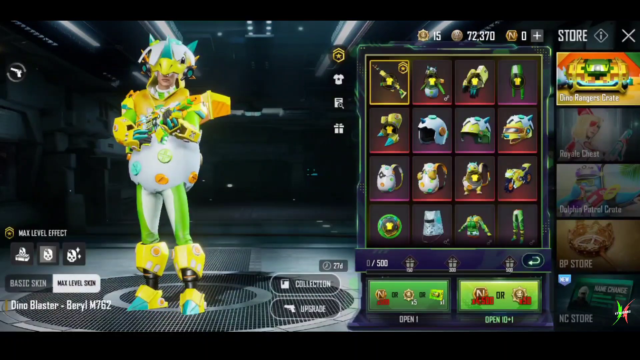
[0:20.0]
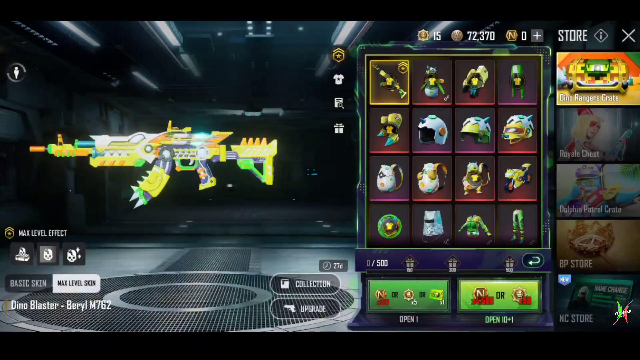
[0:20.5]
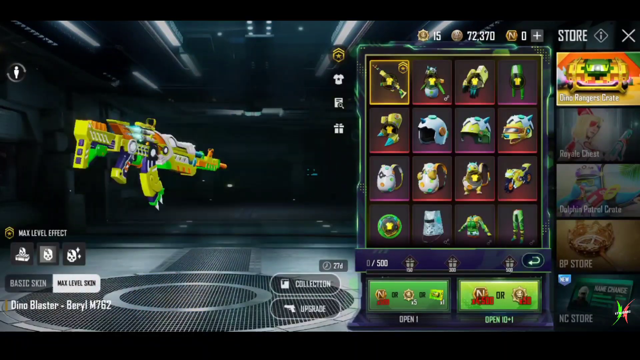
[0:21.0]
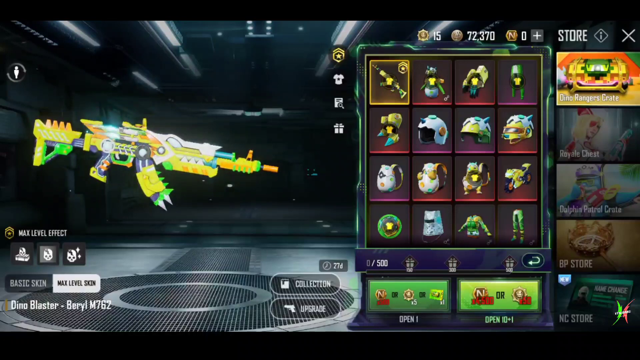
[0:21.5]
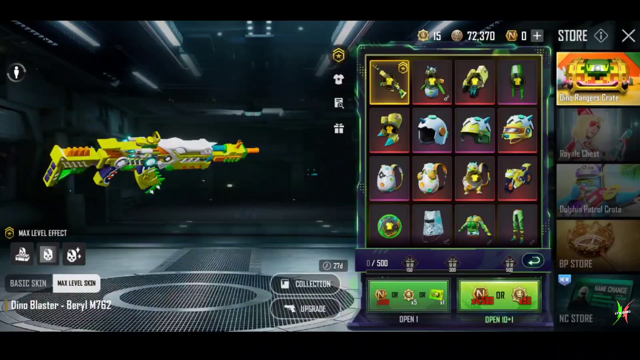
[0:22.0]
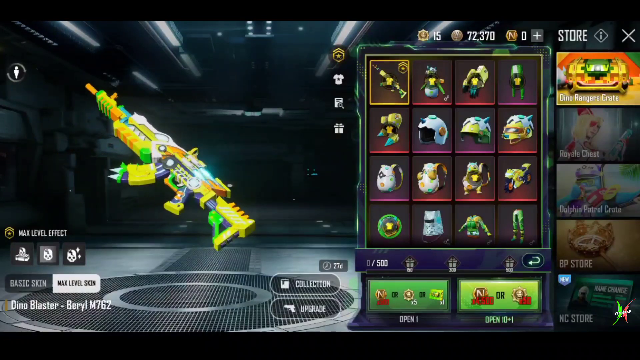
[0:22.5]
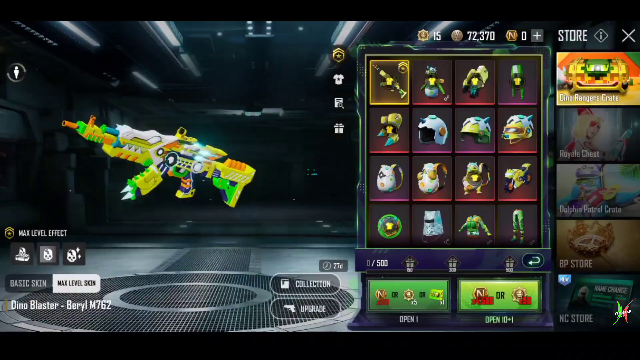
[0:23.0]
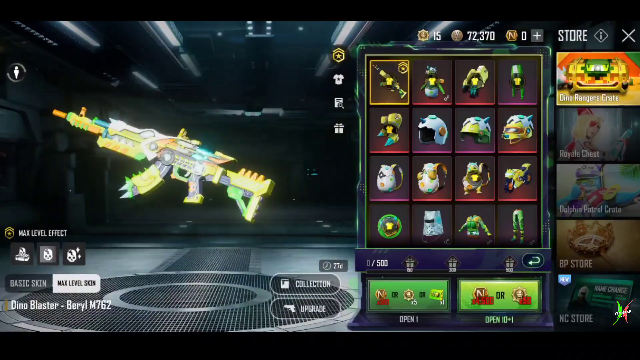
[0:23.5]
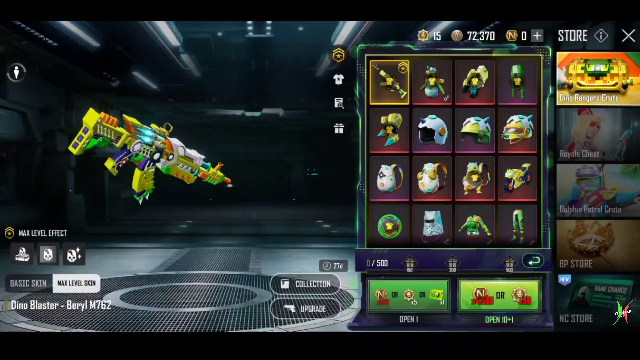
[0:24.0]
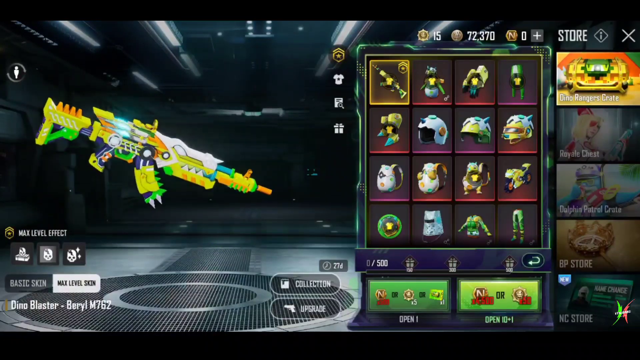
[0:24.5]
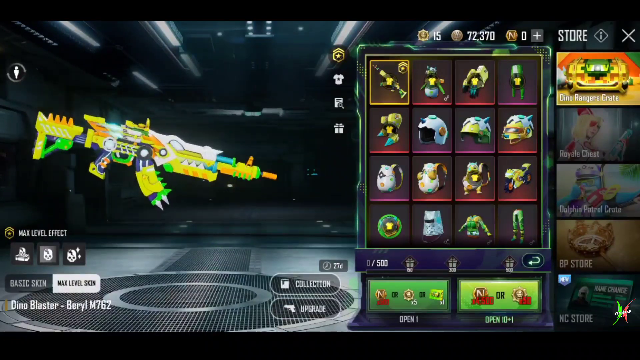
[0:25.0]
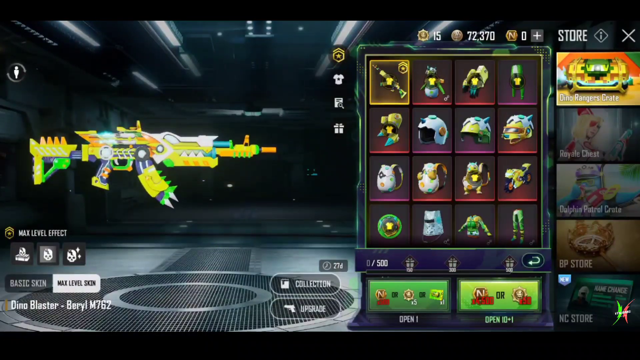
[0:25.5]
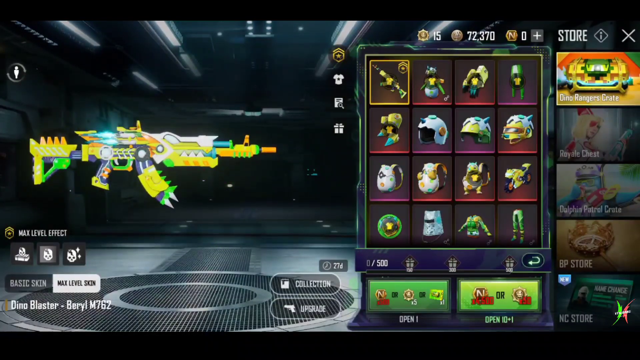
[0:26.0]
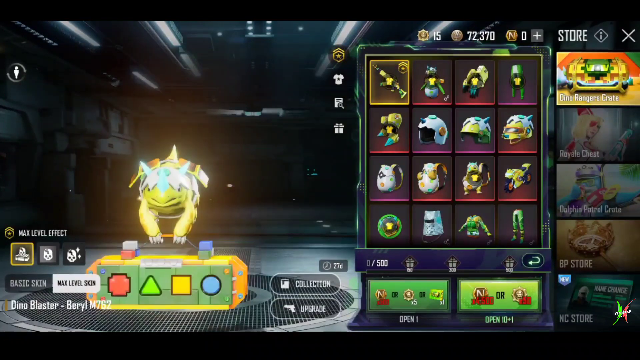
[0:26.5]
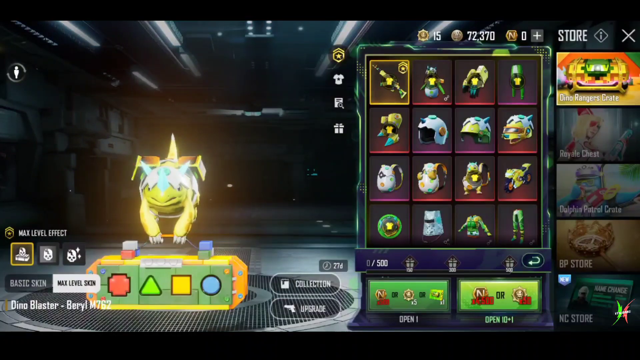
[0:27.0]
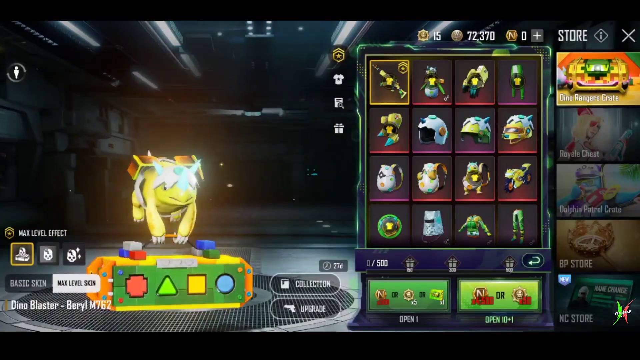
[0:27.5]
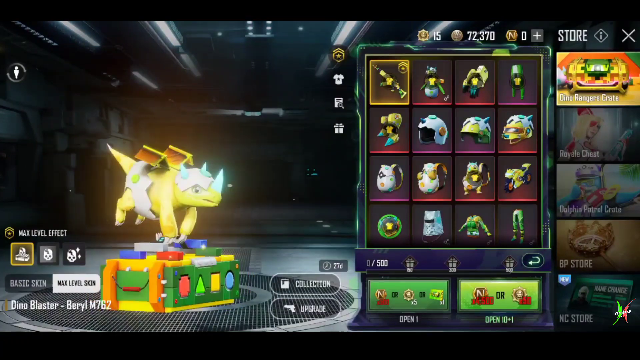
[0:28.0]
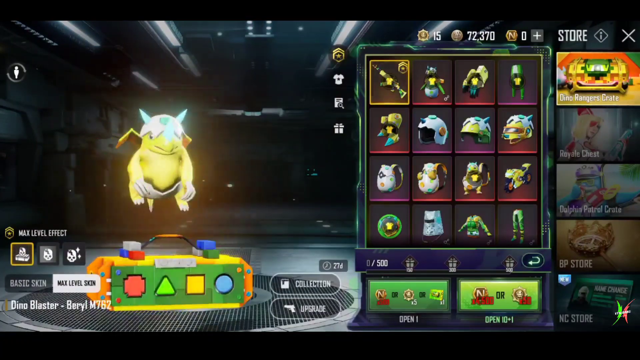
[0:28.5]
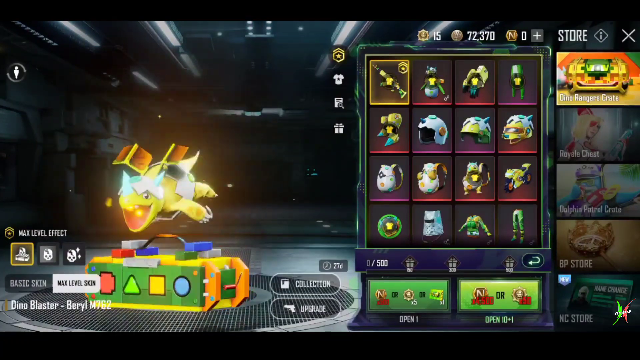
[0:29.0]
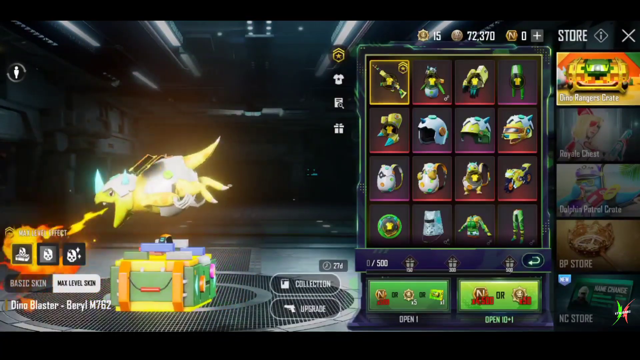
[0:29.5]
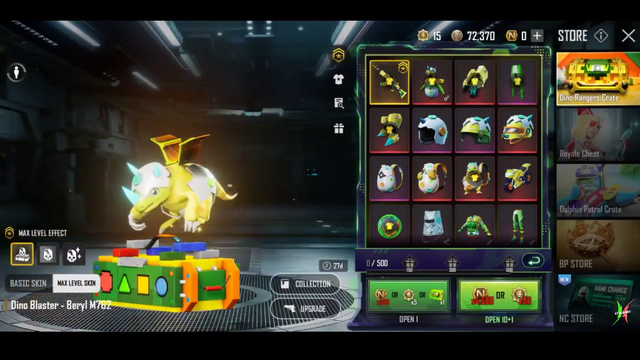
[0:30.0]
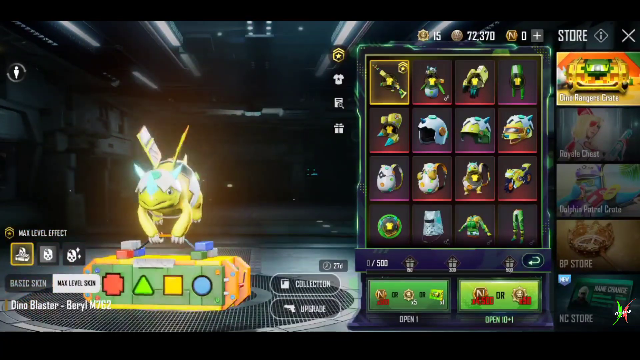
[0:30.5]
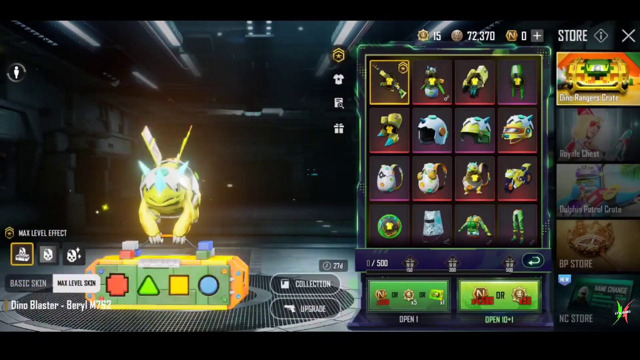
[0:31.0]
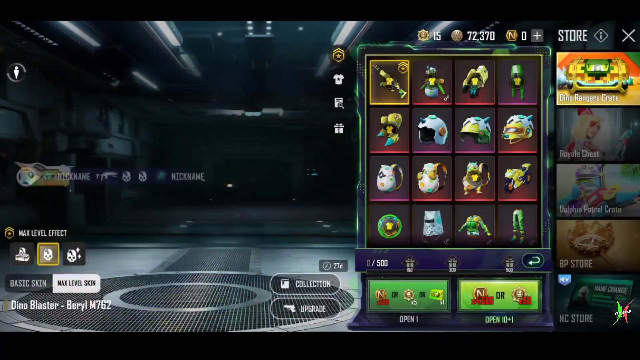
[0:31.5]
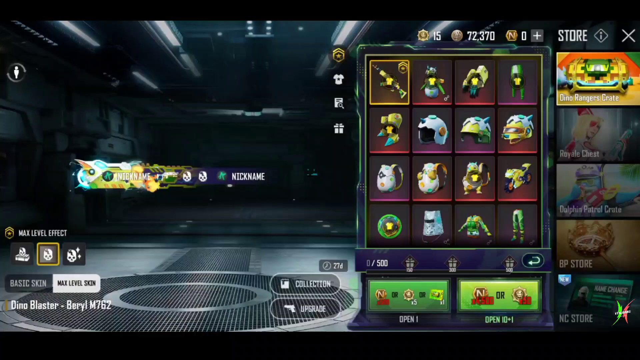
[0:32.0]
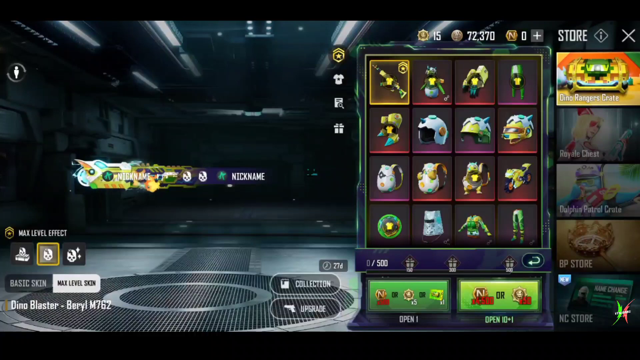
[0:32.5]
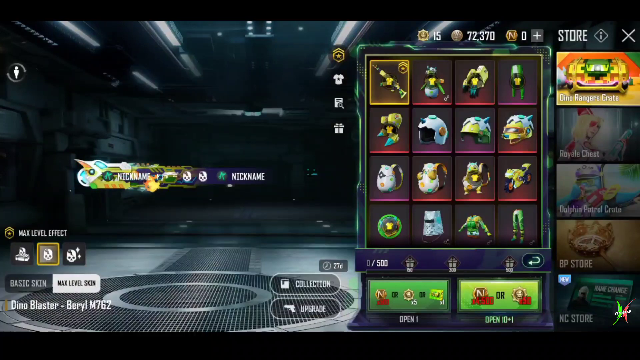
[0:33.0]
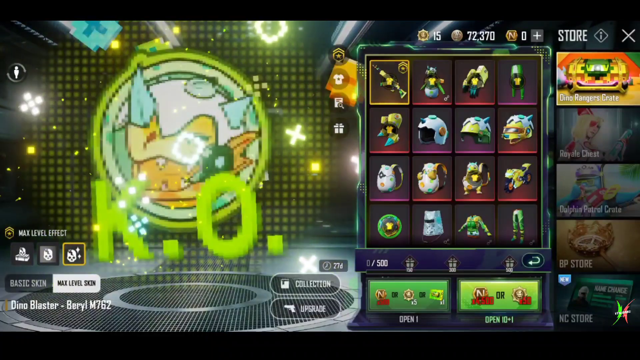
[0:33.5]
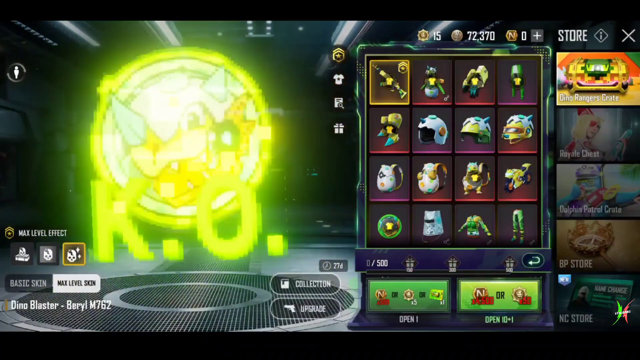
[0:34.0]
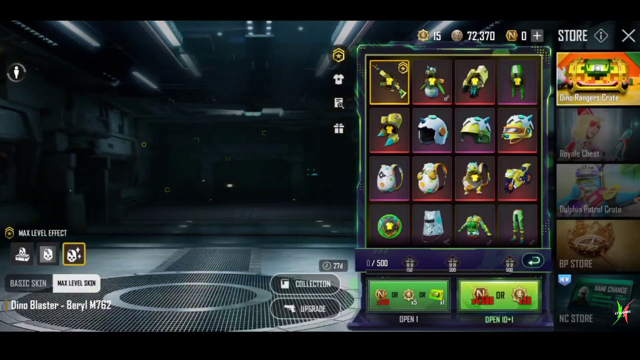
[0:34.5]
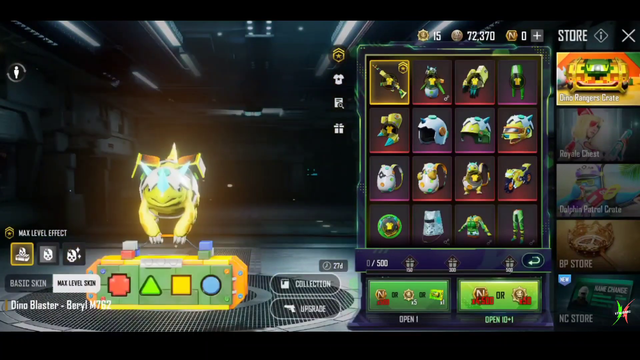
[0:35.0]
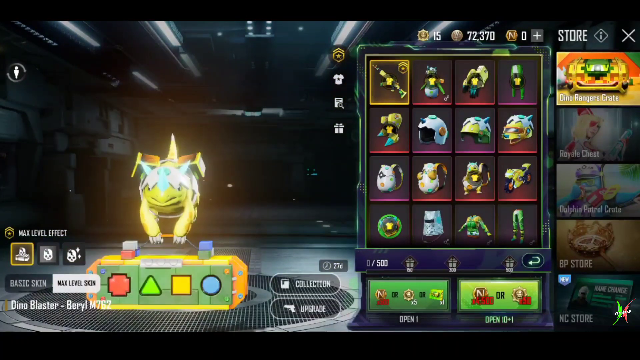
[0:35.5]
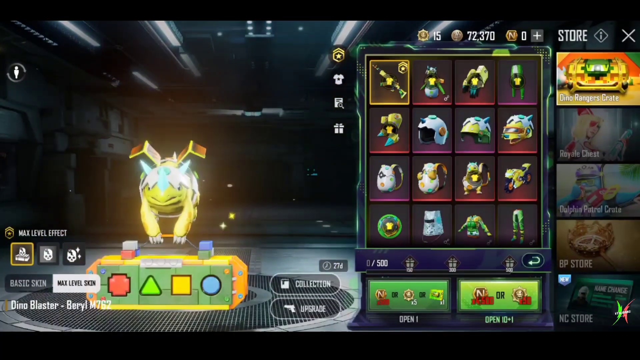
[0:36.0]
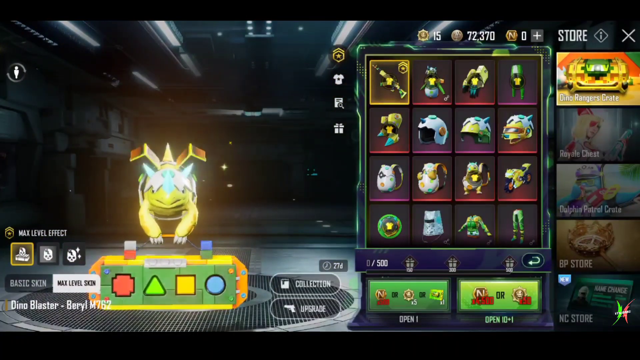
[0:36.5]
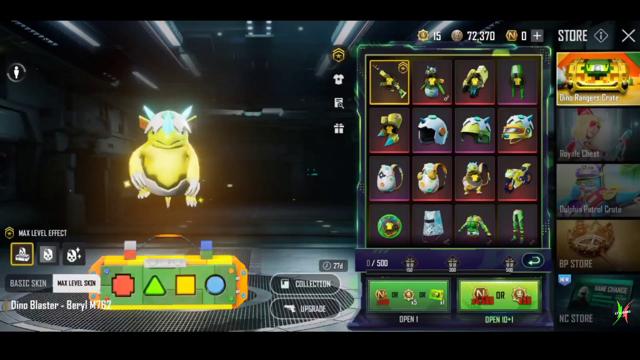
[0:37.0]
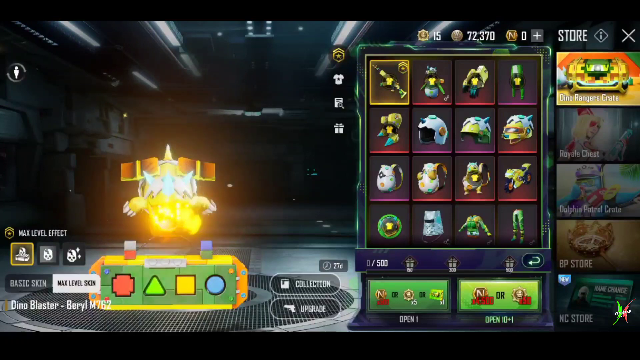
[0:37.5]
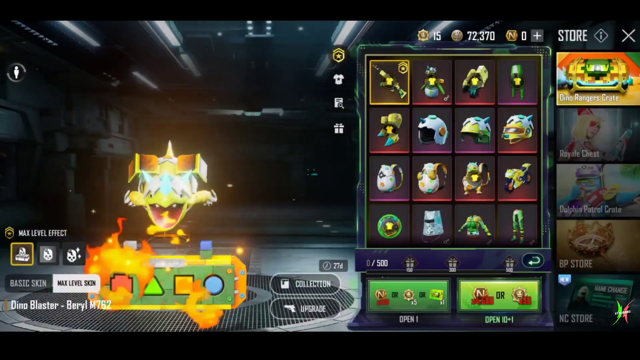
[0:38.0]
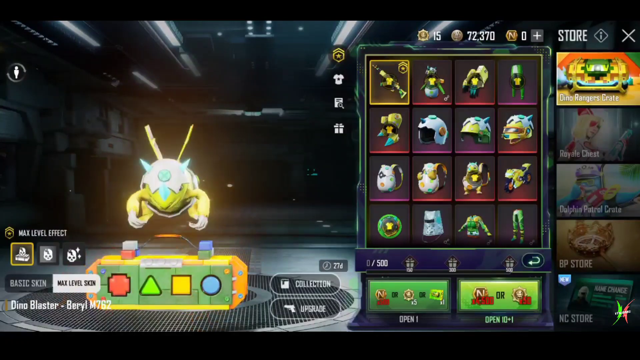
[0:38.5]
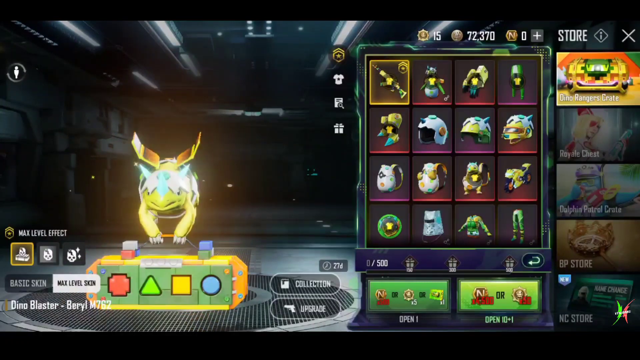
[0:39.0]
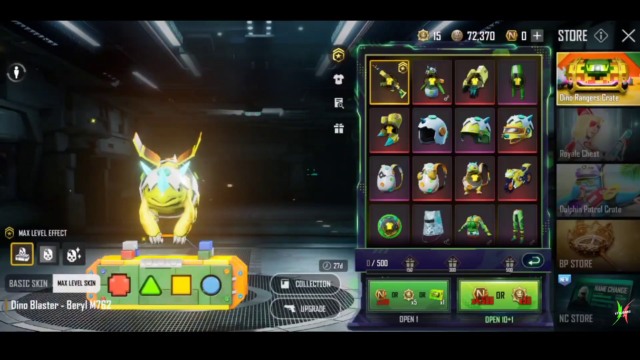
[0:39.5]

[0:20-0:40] What appears to be the Dino Rangers crate is shown, with a weapon labeled "Dino Blaster Barrel M762 Dino Blaster Max Skin Level." It then shows a baby dragon-like monster with three what appear to be diamond horns. At the bottom there is a play block with a red square, a green triangle, a yellow square and a blue circle, almost like a boombox radio. On the right side there are stickers such as "K.O." with a dinosaur in the background. The crate contains one weapon and many customizables, such as helmets, backpacks, armor such as body plates and leg plates, and customized armor for arm braces, boots, body plates and legs. Each item has a different color, and the weapon, the most sought-after legendary item, is yellow compared to the rest.